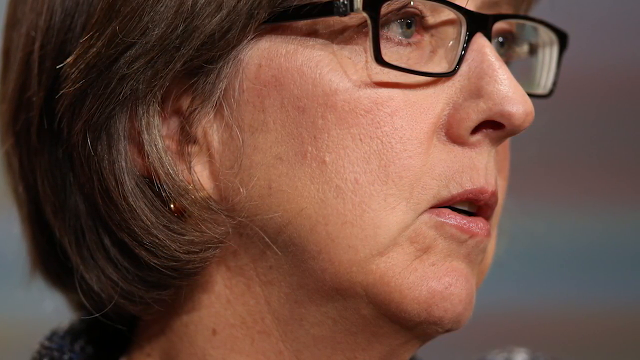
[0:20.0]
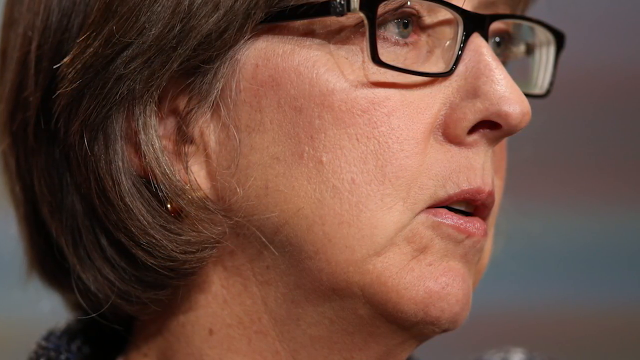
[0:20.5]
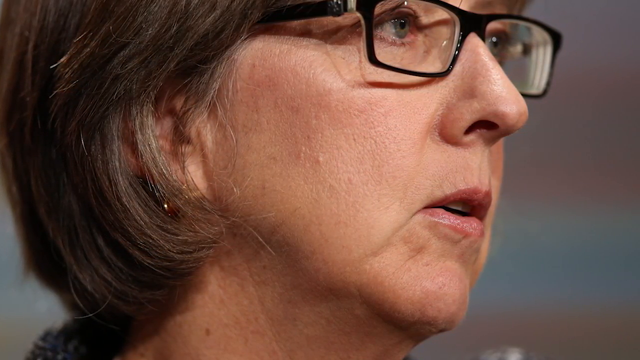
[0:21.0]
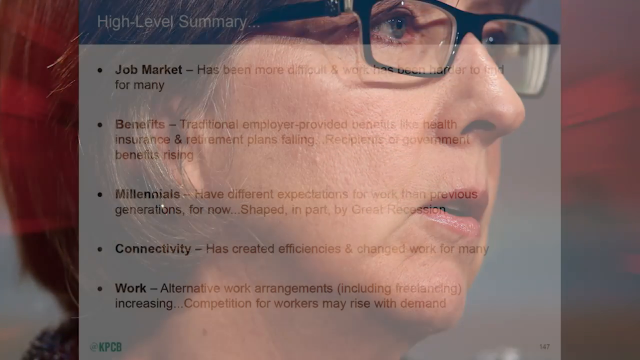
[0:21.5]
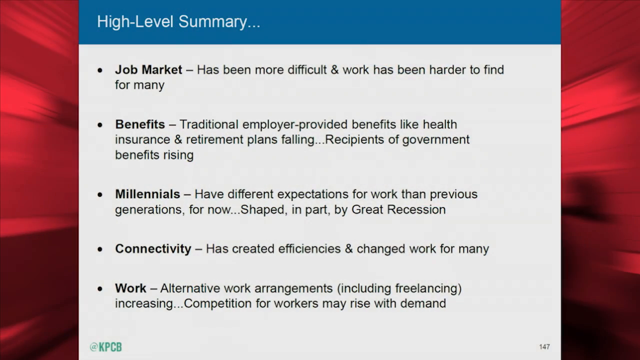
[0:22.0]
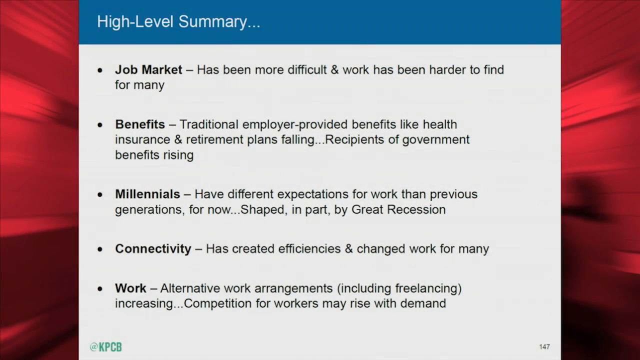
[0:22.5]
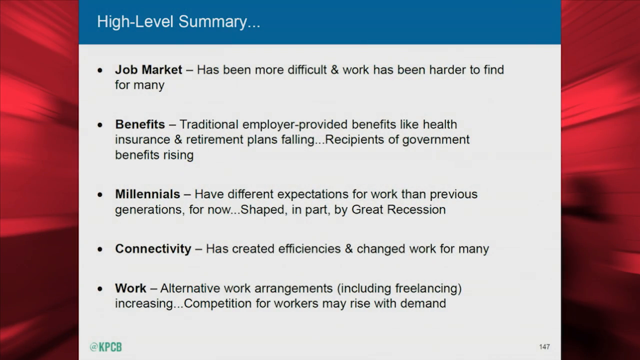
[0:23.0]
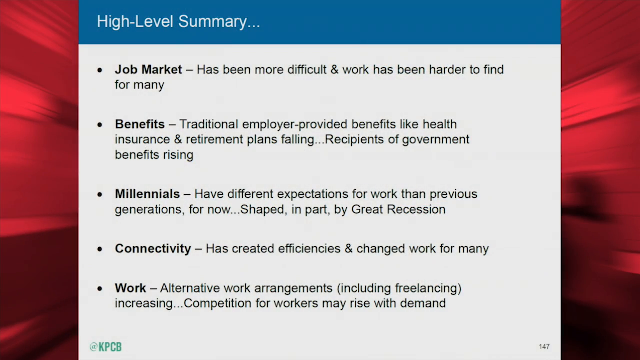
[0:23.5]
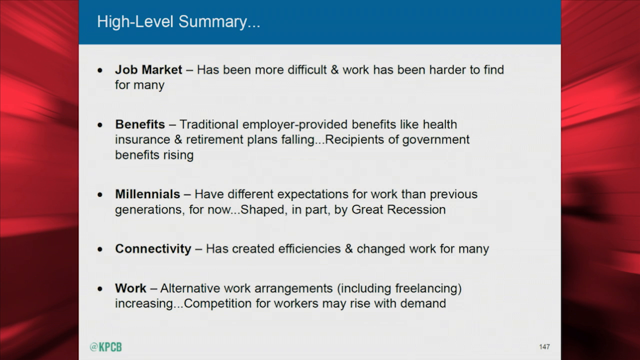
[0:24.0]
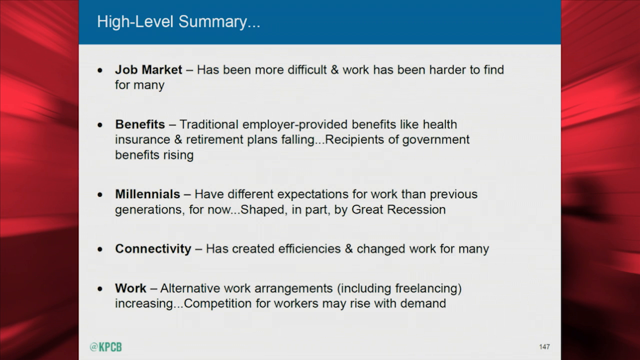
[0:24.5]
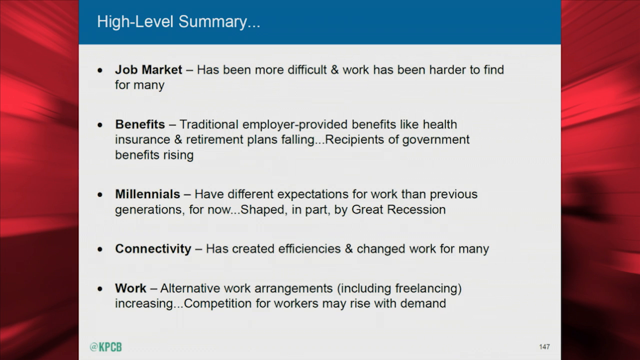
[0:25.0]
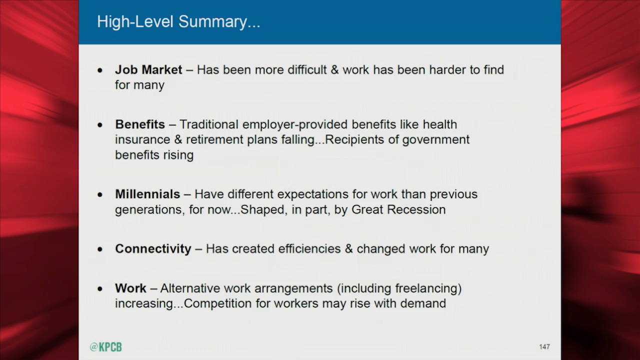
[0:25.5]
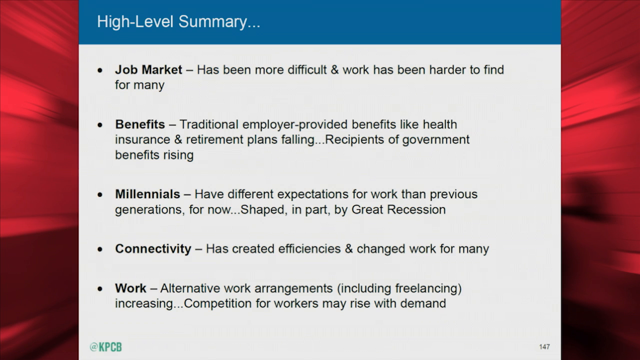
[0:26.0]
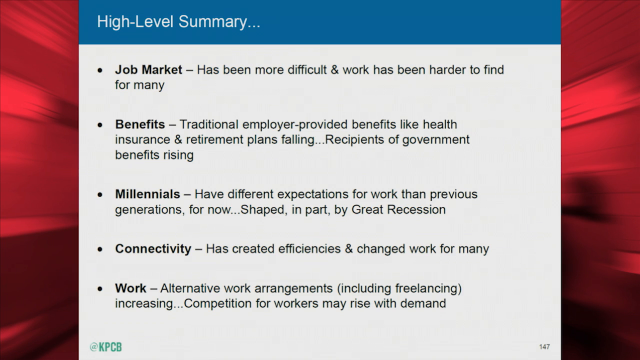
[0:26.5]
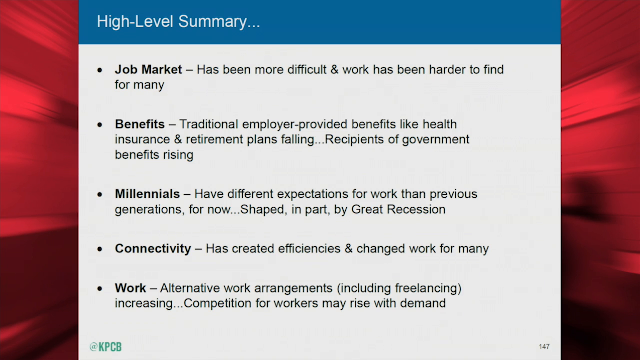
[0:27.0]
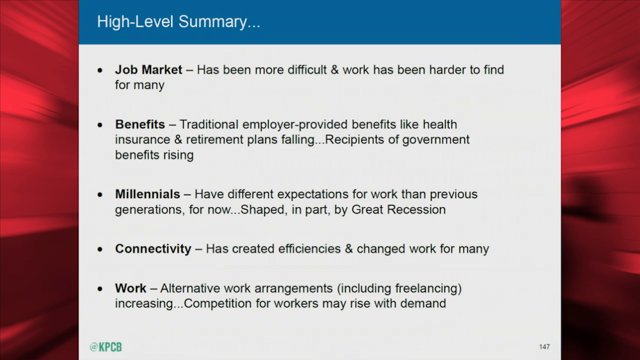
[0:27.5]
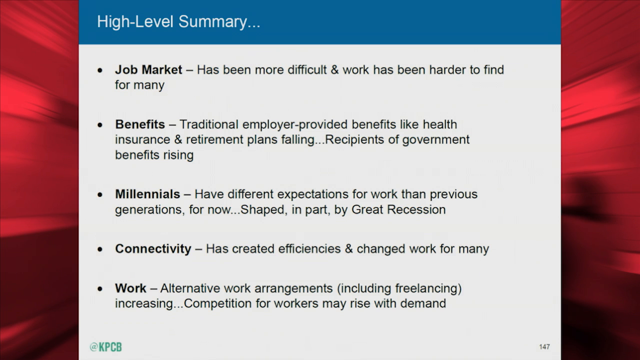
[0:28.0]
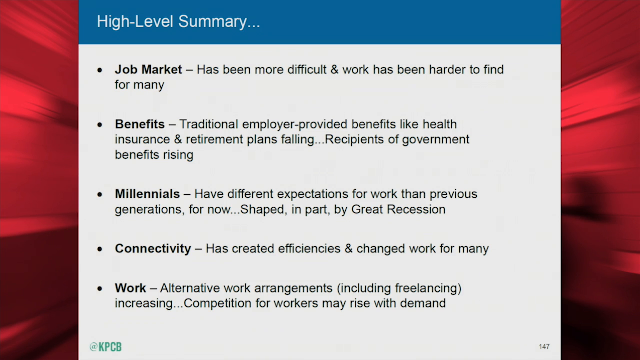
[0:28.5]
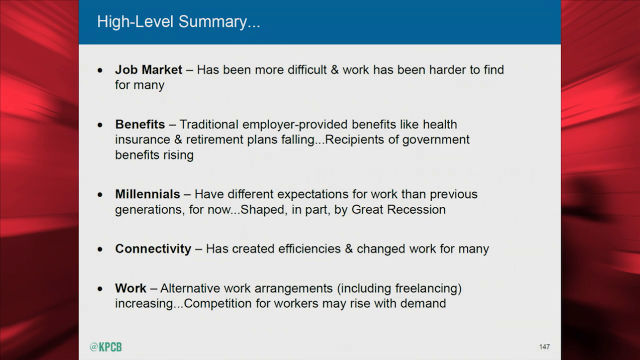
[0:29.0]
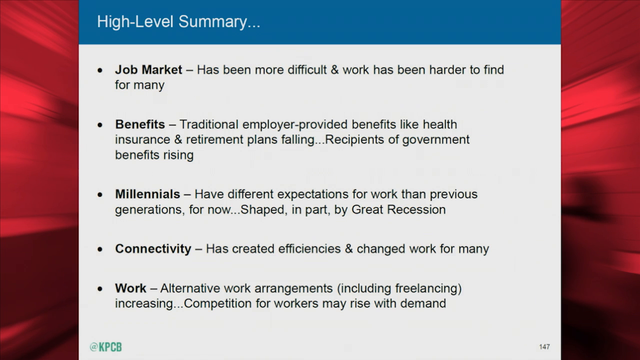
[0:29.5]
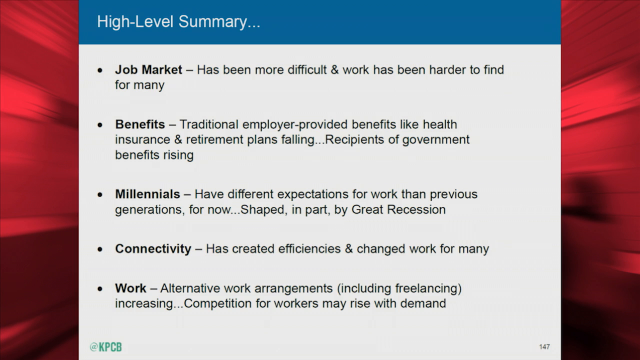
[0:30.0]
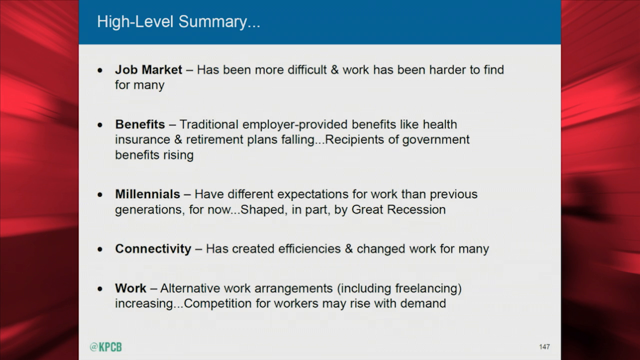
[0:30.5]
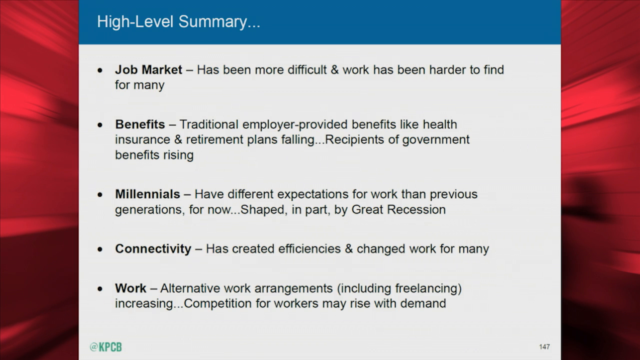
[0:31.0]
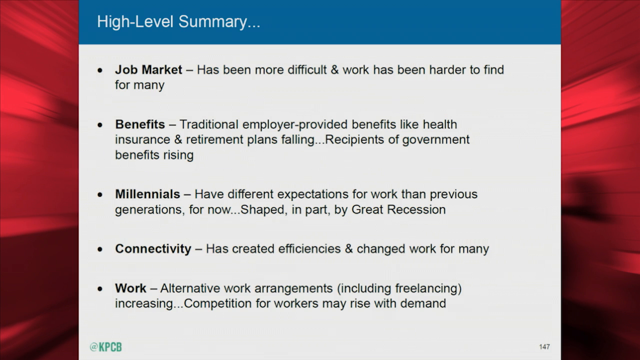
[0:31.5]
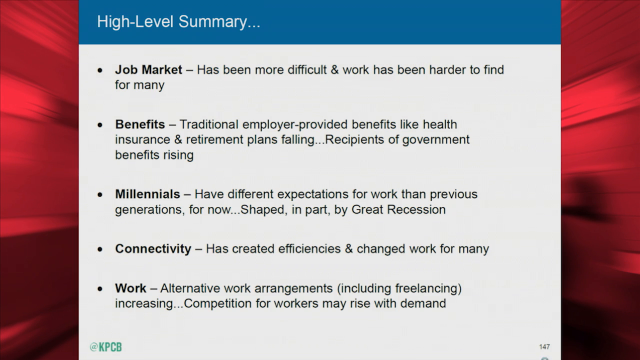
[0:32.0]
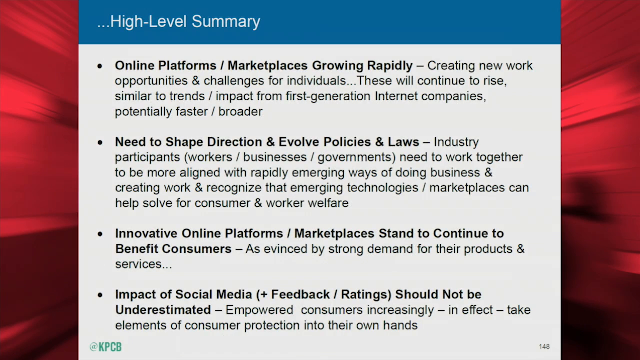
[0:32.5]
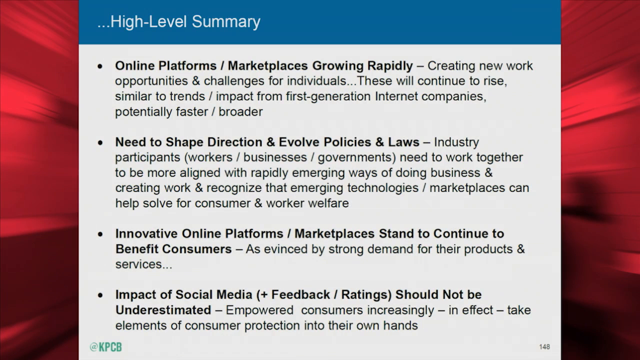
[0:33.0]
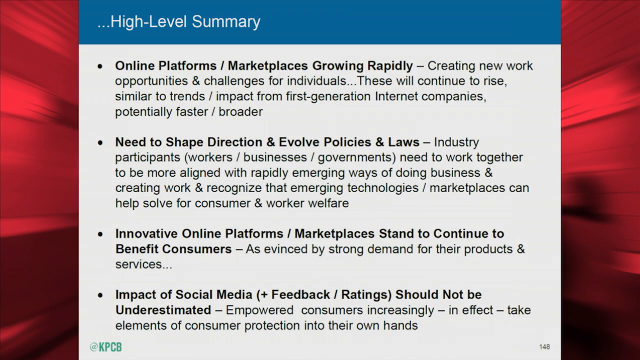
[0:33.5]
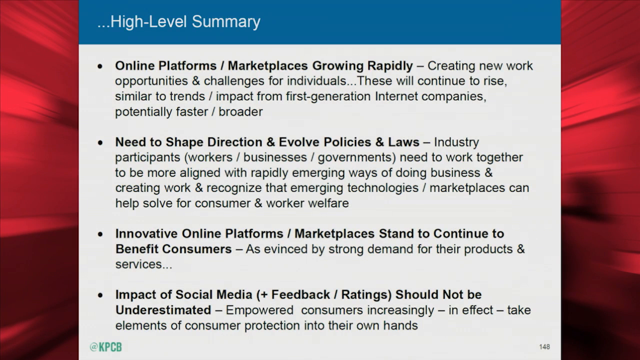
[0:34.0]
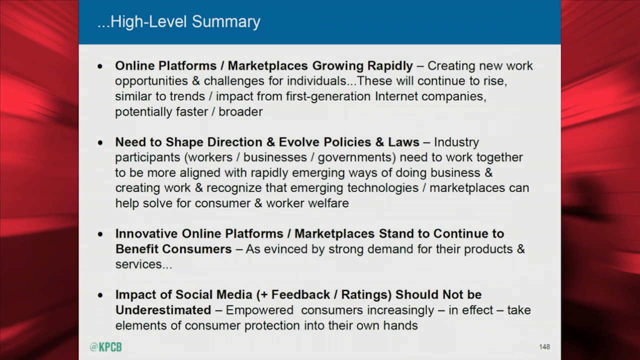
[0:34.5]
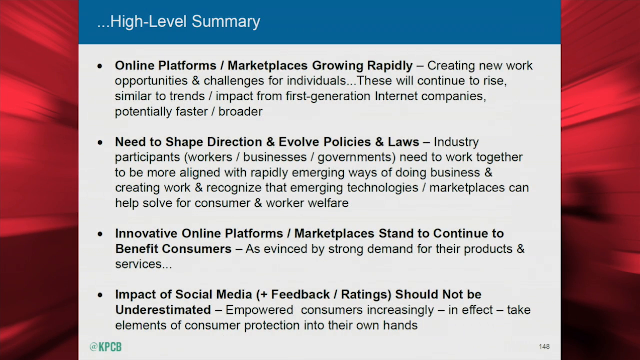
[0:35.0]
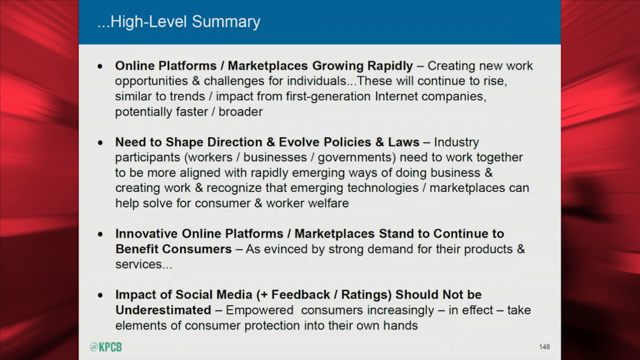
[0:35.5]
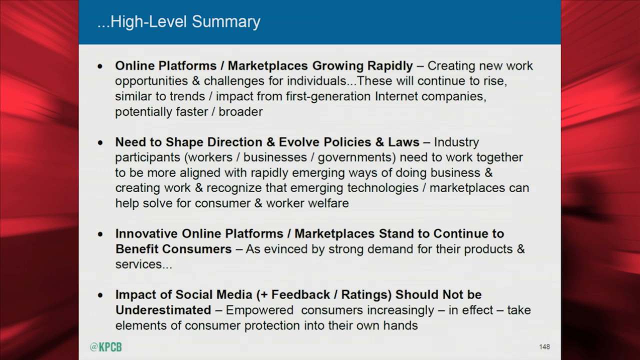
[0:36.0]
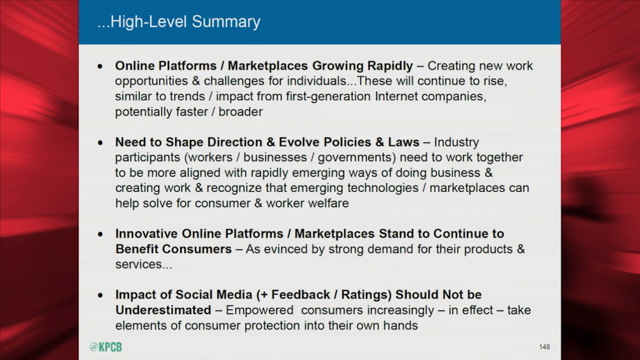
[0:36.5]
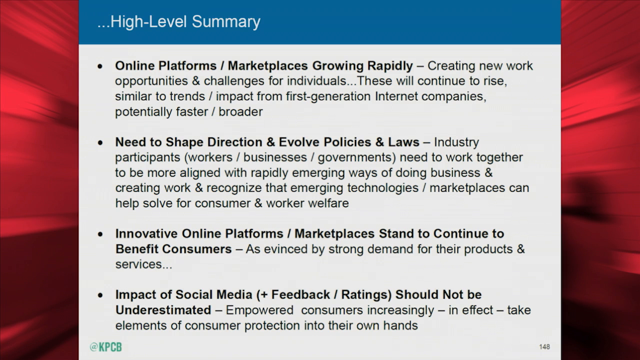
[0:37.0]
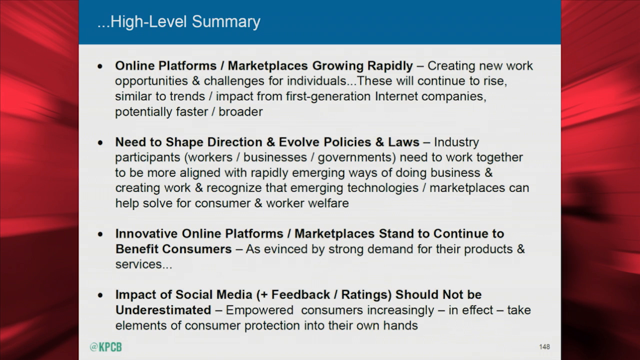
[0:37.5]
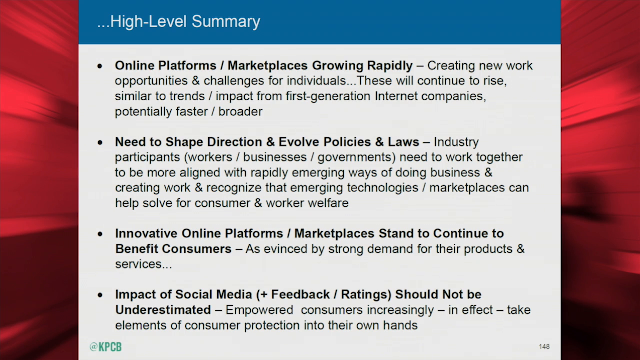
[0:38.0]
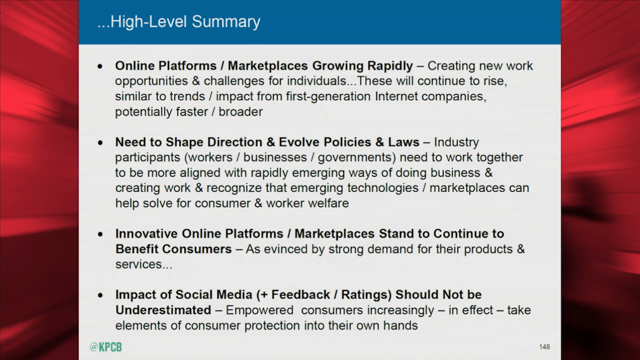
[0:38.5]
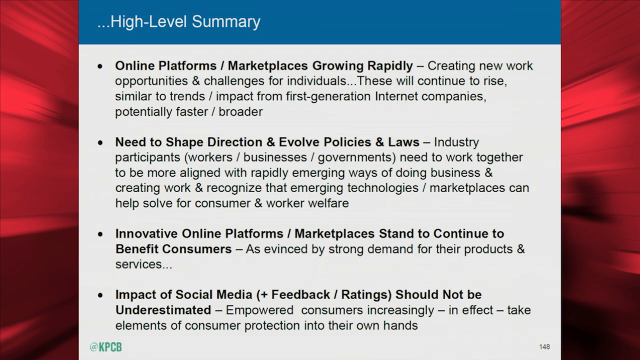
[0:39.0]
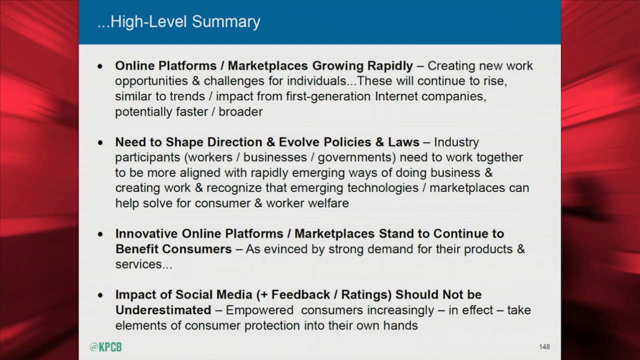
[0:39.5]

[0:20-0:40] A still shot shows a white woman with brunette hair cut into a short bob, wearing dark-rimmed, rectangular glasses. The right side of her face is seen in profile as she faces toward the right of the screen, and gold earrings are vaguely visible. After a few seconds the image disappears, replaced by a red background that looks almost like fabric. In the center, covering most of the screen, is what looks almost like a page of text. A blue bar at the top has white lettering aligned to the left reading "High-Level Summary...". Below are five bullet points, the first in bold black letters: "Job market-has been more difficult and work has been harder to find for many"; "Benefits-Traditional employer-provided benefits like health insurance and retirement plans failing...recipients of government benefits rising"; "Millennials-Have different expectations for work than previous generations, for now... Shaped, in part, by Great Recession"; "Connectivity-Has created efficiencies & changed work for many"; and "Work-Alternative work arrangements (including freelancing) increasing... Competition for workers may rise with demand". The text on the white portion then changes to four bullet points, the first in bold: "Online platforms/marketplaces growing rapidly-Creating new work opportunities, & challenges for individuals... These will continue to rise, similar to trends/impact from first-generation internet companies, potentially faster/broader"; "Need to shape direction & evolve policies and laws-Industry participants (workers, business, and governments) need to work together to be more aligned with rapidly emerging ways of doing business & creating work & recognize that emerging techniques/marketplaces can help solve for consumer and worker welfare"; "Innovative online platforms/marketplaces stand to continue to benefit consumers-As evinced by strong demand for their products and services"; and "Impact of social media (+Feedback/Ratings) should not be underestimated-Empowered consumers increasingly - in effect -take elements of consumer protection into their own hands".